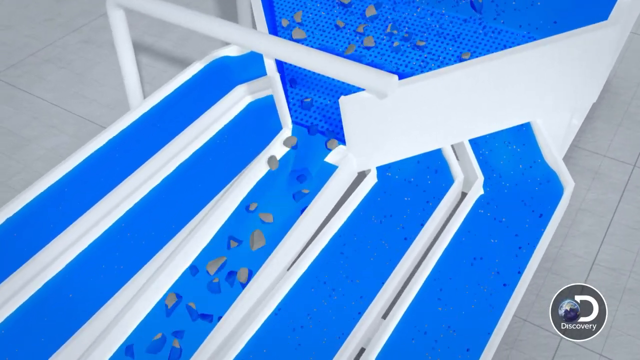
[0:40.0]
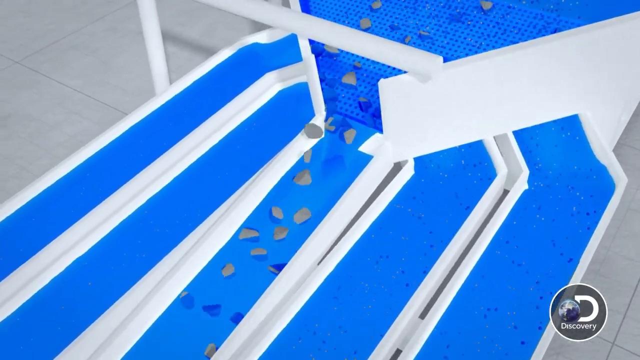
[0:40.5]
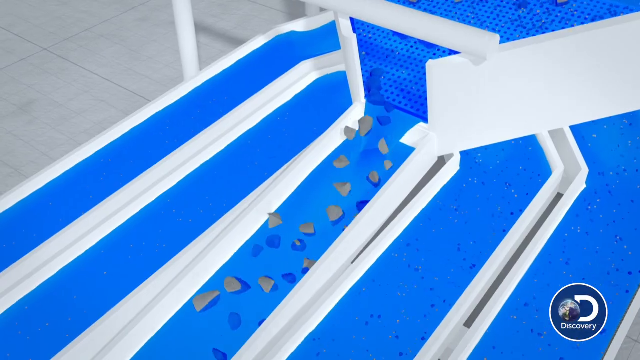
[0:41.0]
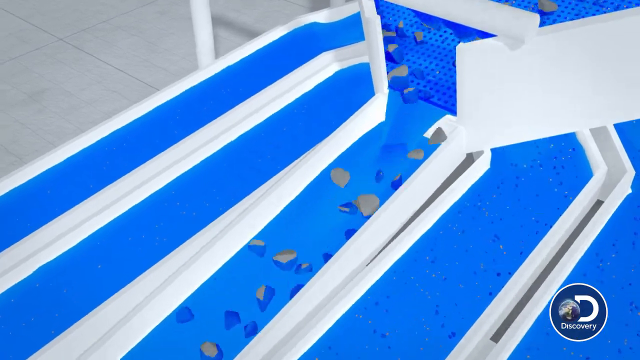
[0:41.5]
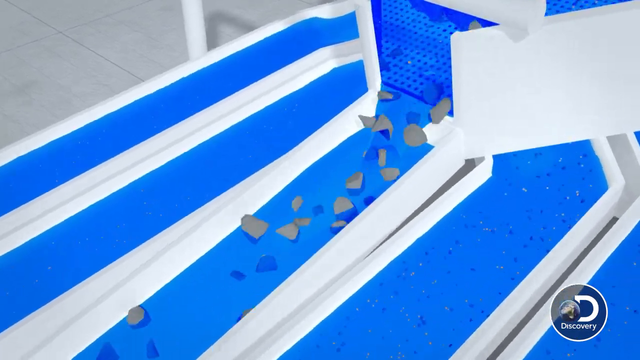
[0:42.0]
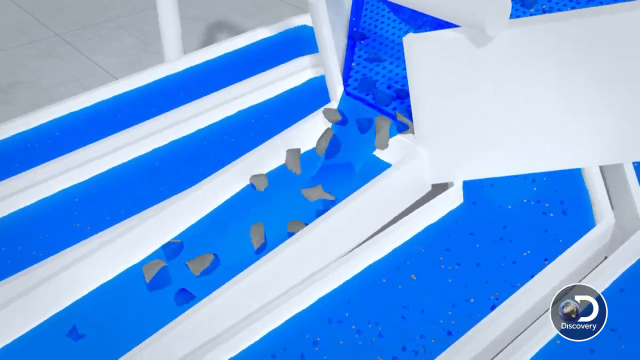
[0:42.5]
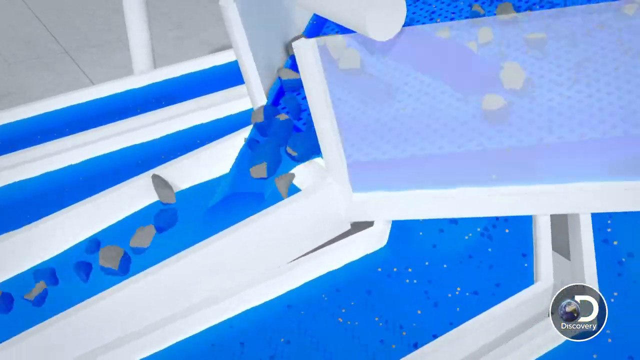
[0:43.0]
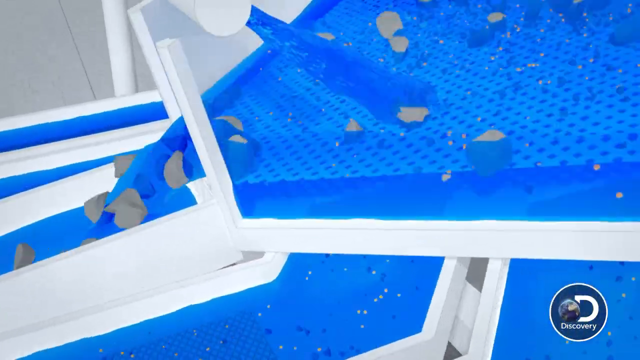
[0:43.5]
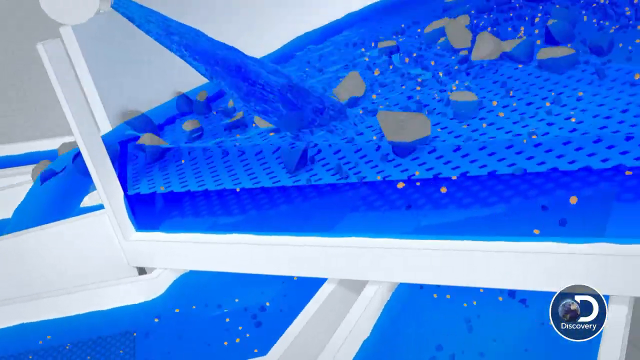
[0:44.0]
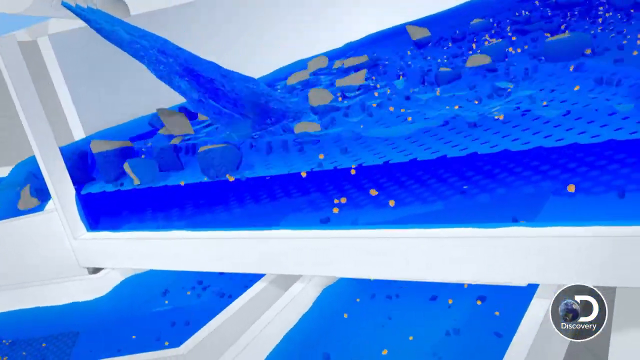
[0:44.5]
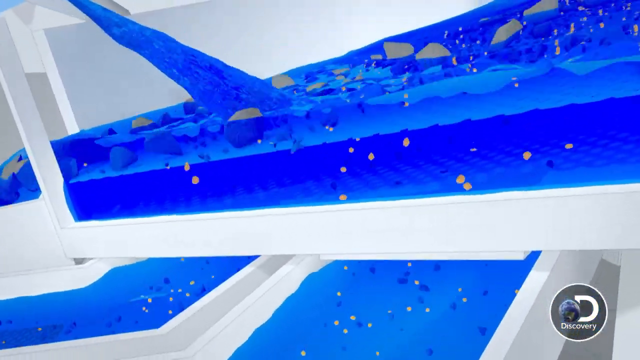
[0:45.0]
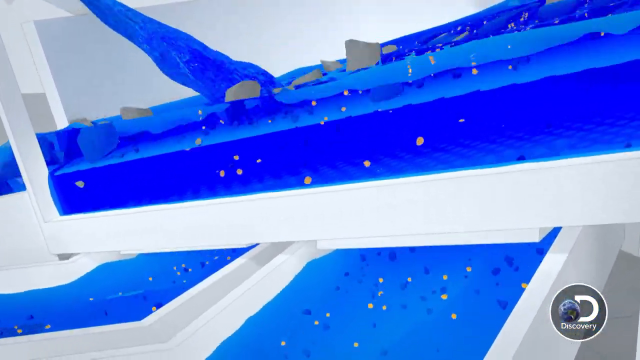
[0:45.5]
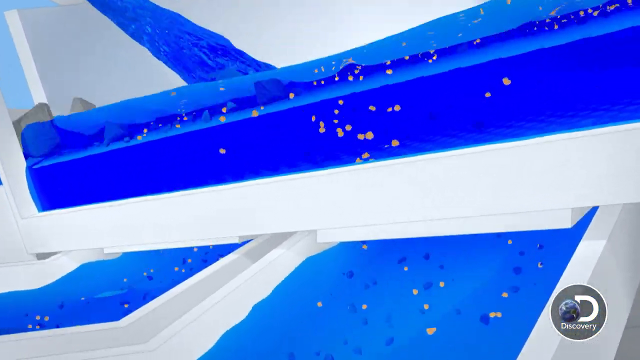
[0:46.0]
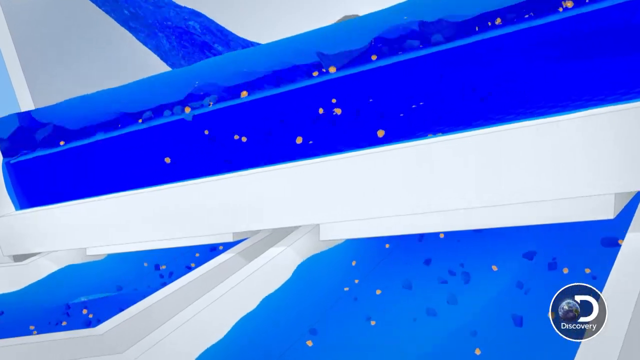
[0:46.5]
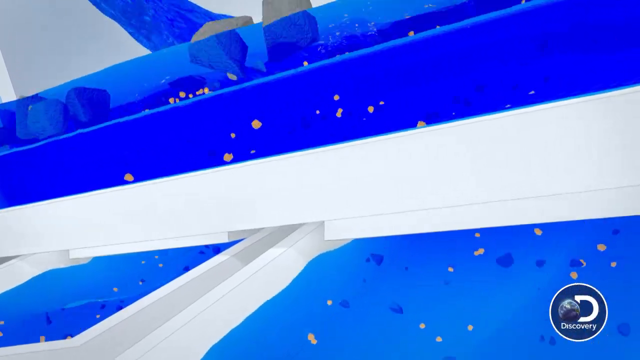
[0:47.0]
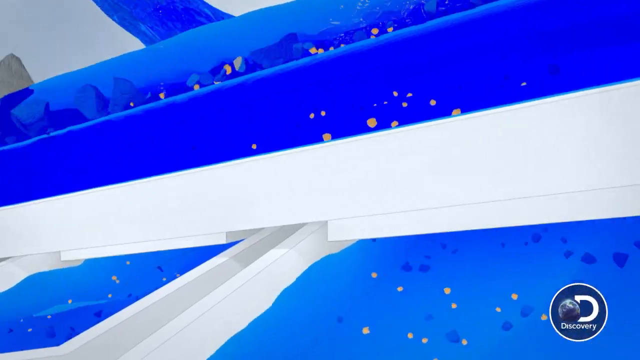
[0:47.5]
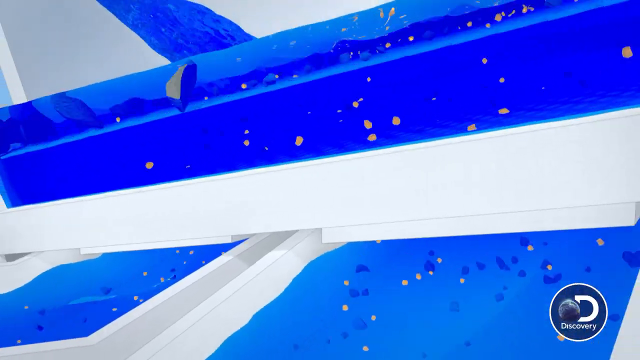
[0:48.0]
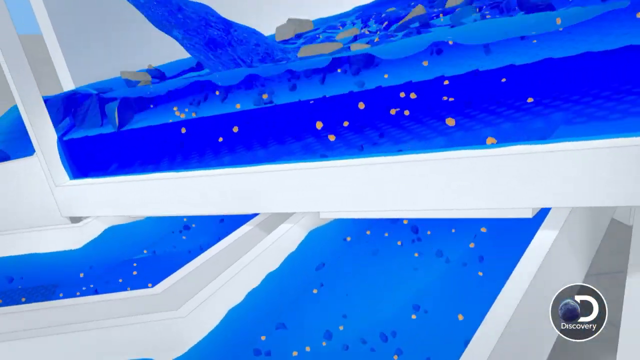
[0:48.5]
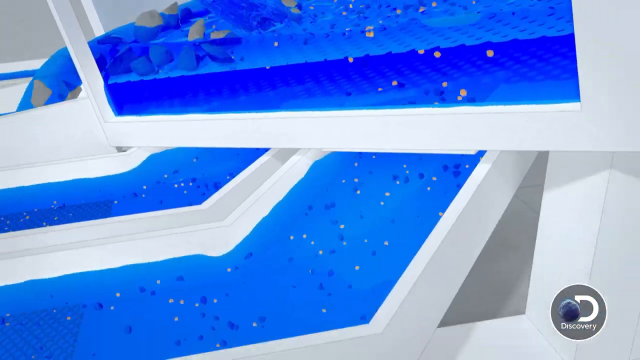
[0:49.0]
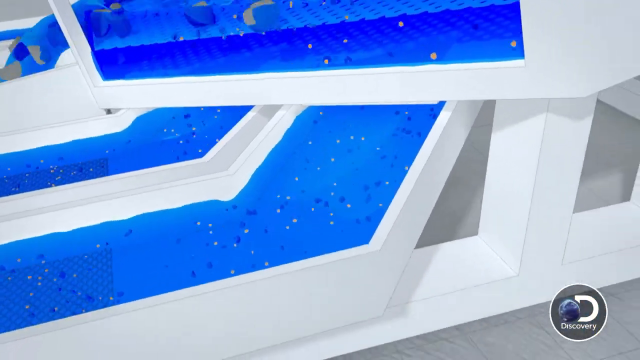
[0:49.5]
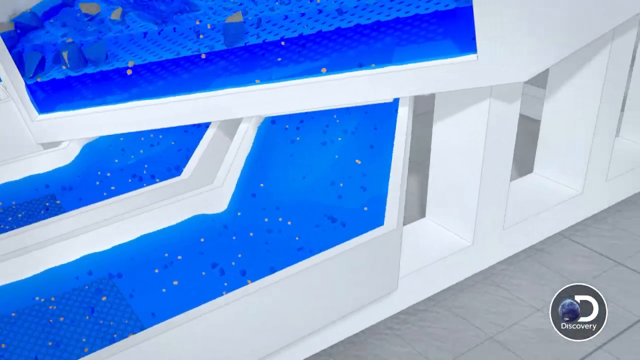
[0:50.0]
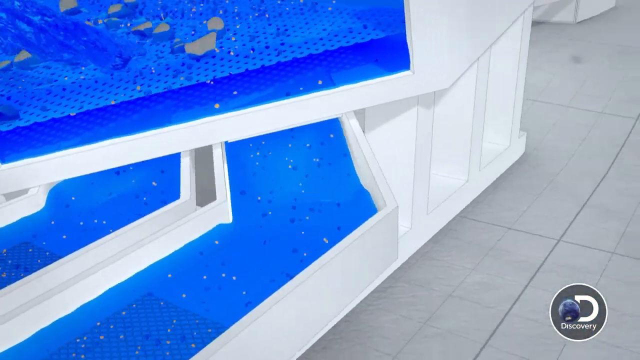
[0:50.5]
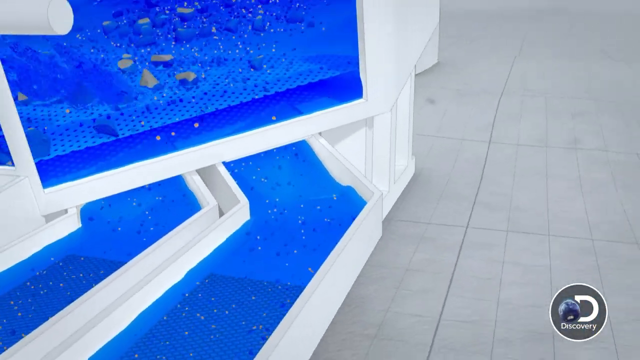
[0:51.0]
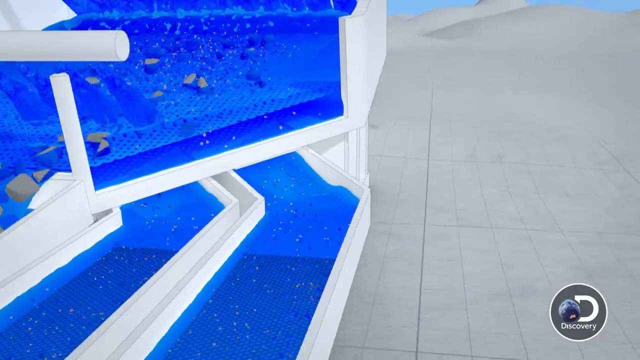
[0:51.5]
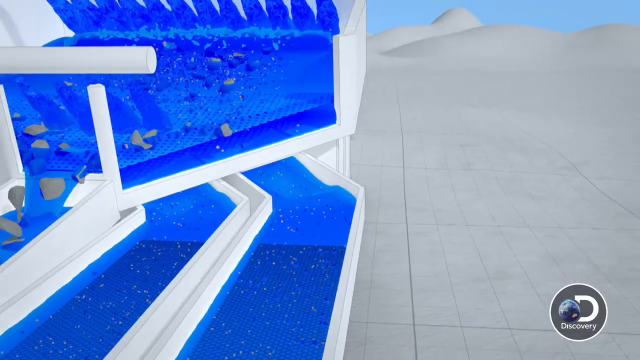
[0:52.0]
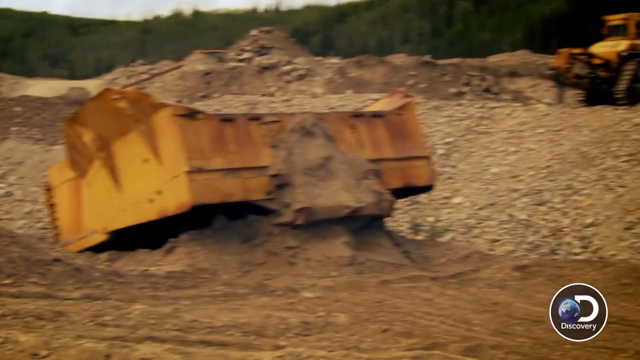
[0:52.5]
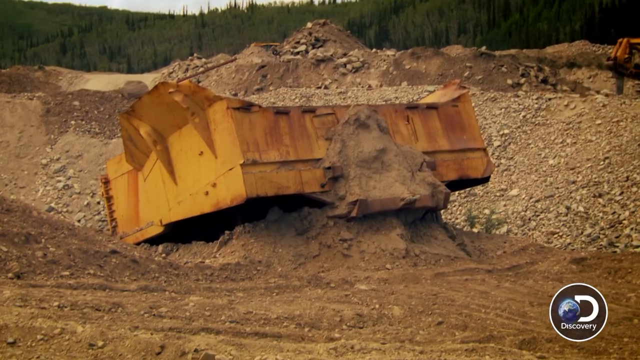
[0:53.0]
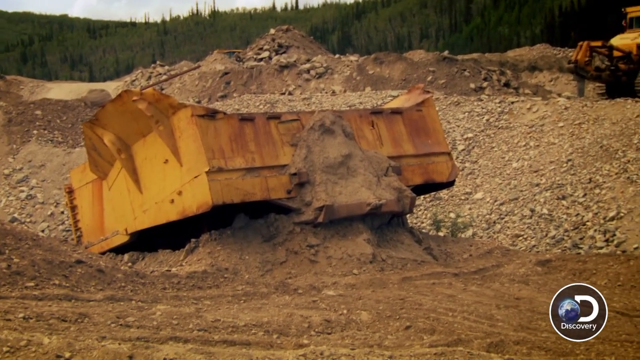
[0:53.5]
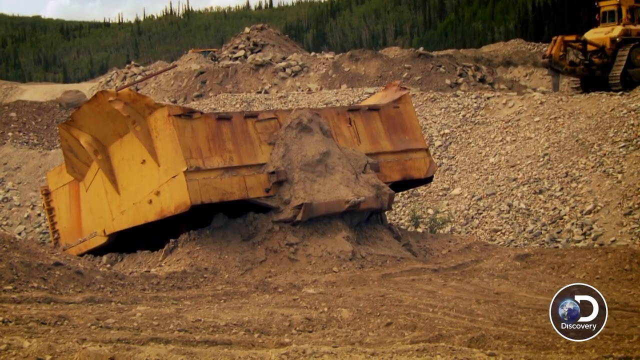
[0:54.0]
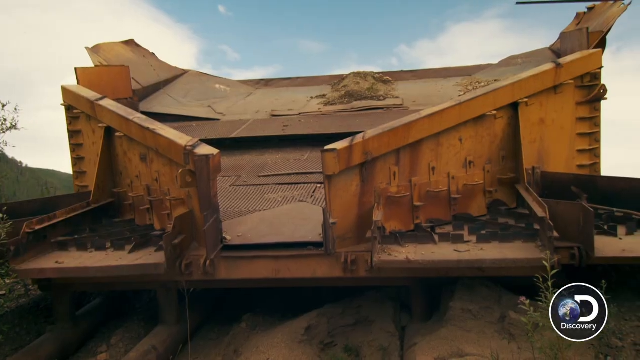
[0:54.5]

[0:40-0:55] The computer graphic of the machine continues, with water flowing and chunks of dirt and gold being funneled into a central line area. There seem to be about five different rows, all channeled into the center row. The graphic moves around to show different angles, including a view from kind of under the water, where the gold starts to be sorted out from the larger chunks of dirt, and different angles of the four funnels where the main area is not being pushed through. The view zooms out and then switches back to a real-life view of the actual machine from earlier.